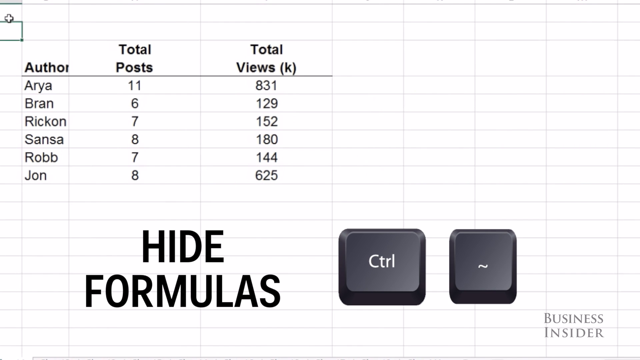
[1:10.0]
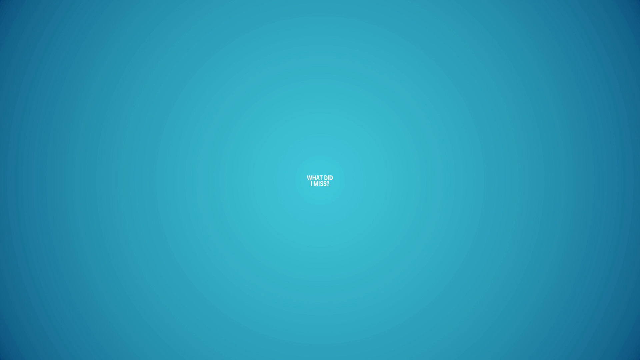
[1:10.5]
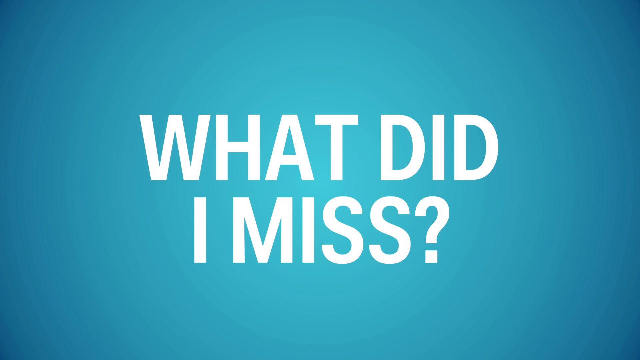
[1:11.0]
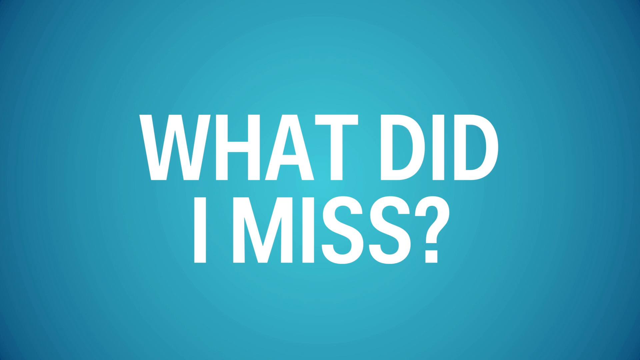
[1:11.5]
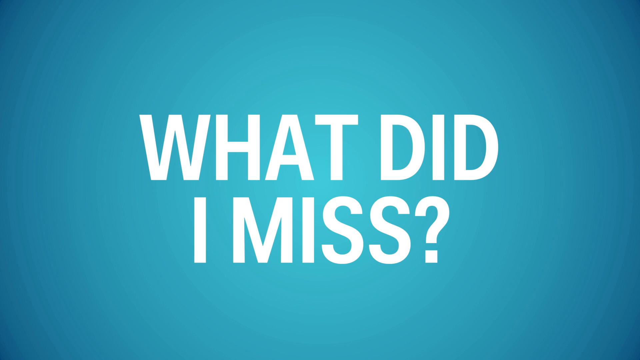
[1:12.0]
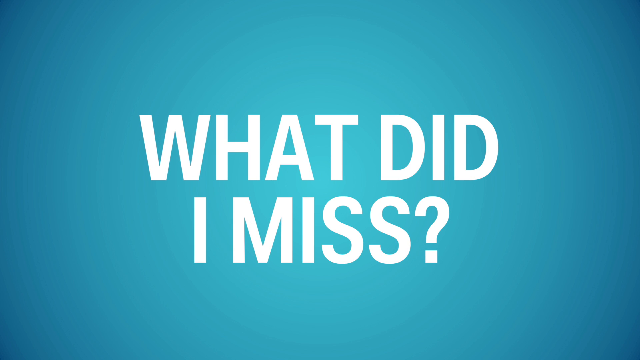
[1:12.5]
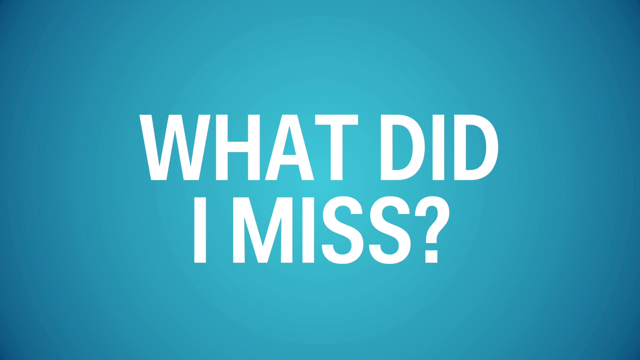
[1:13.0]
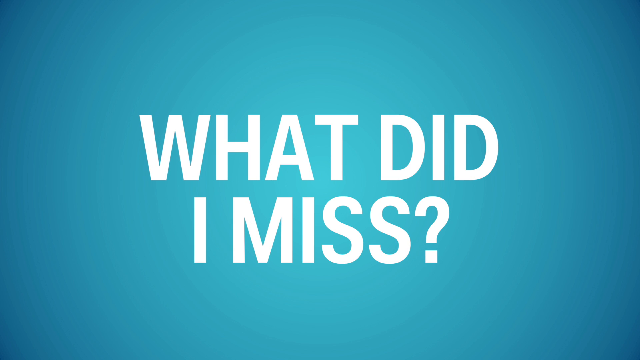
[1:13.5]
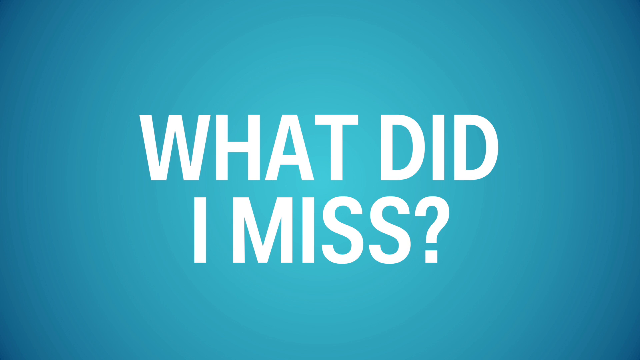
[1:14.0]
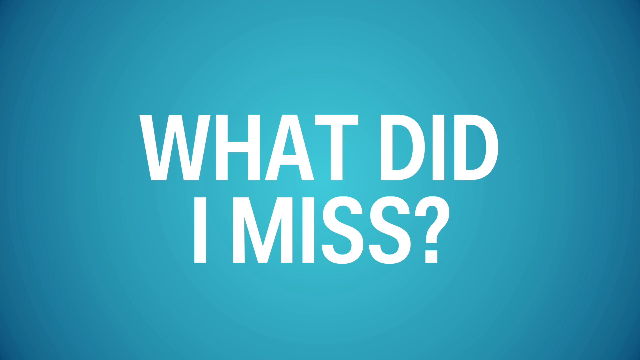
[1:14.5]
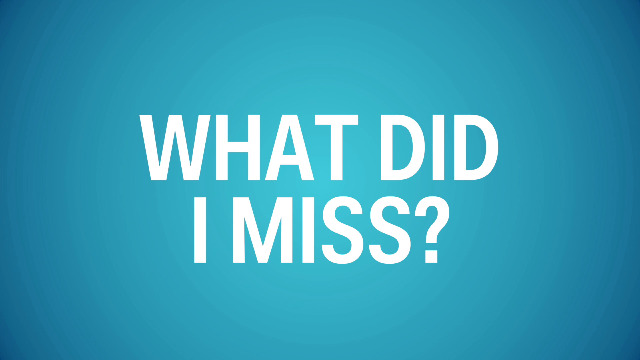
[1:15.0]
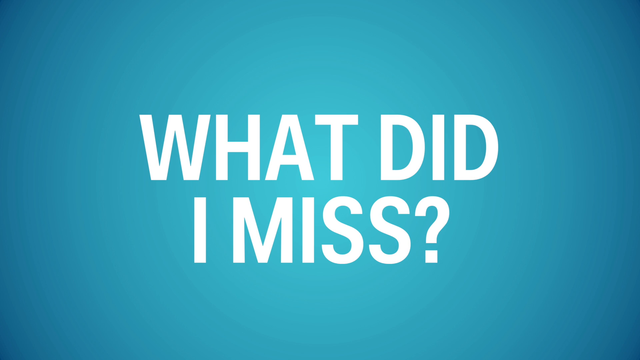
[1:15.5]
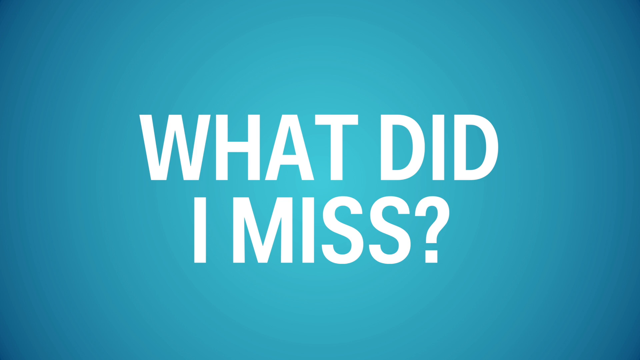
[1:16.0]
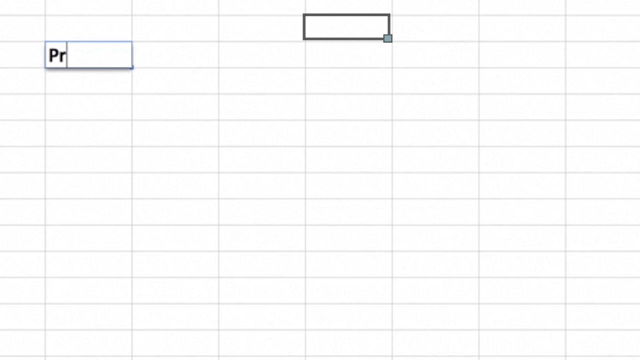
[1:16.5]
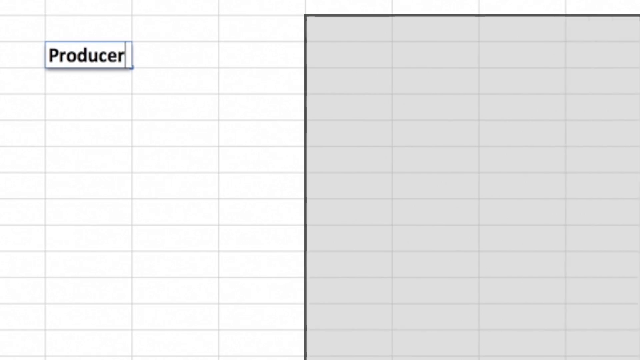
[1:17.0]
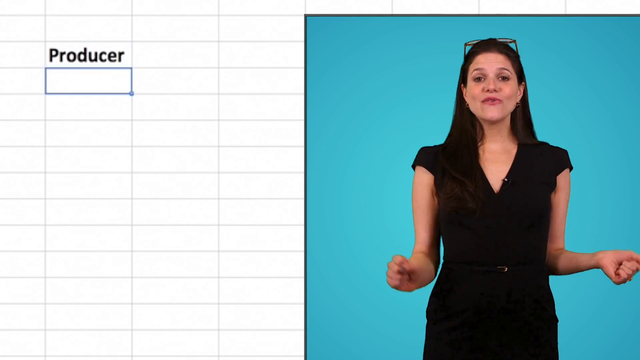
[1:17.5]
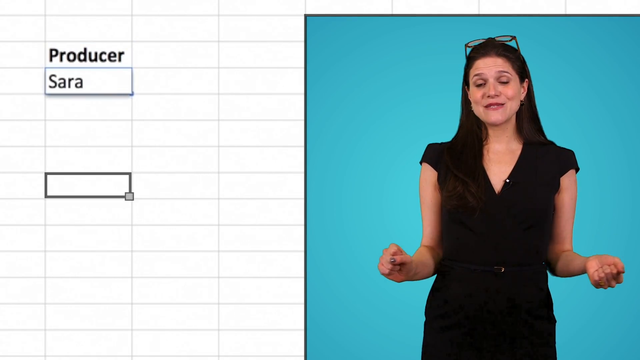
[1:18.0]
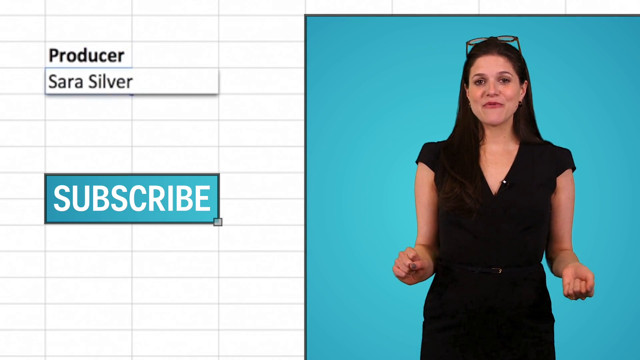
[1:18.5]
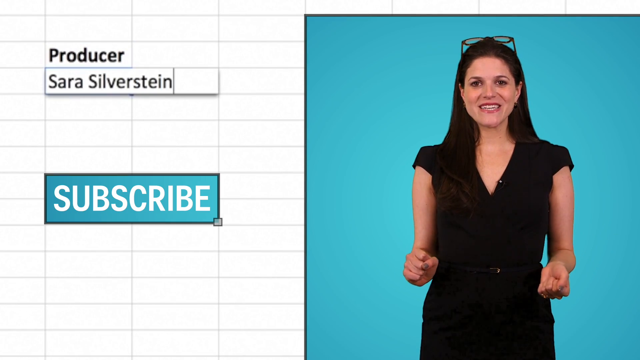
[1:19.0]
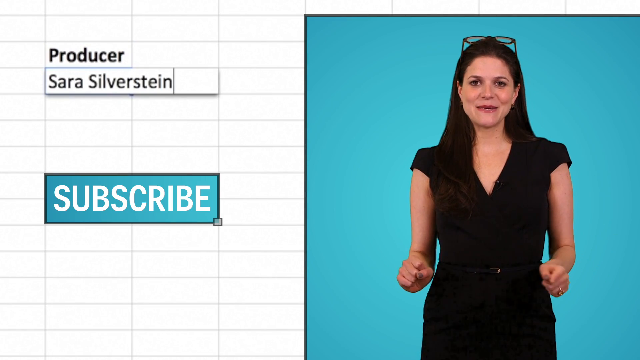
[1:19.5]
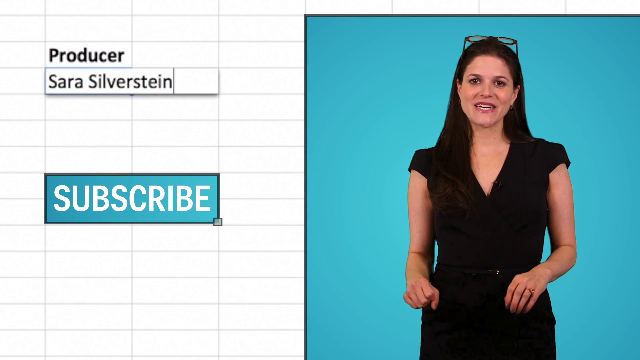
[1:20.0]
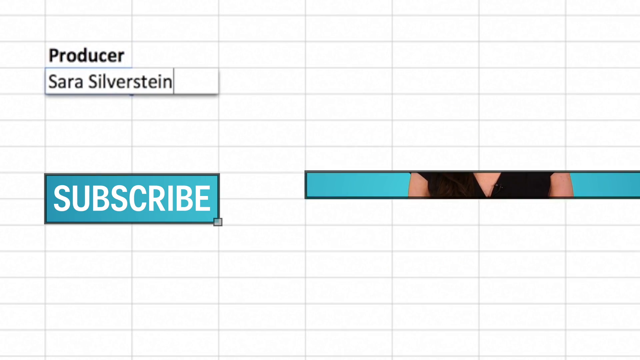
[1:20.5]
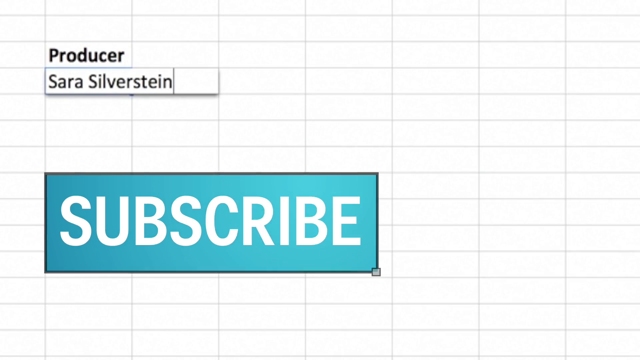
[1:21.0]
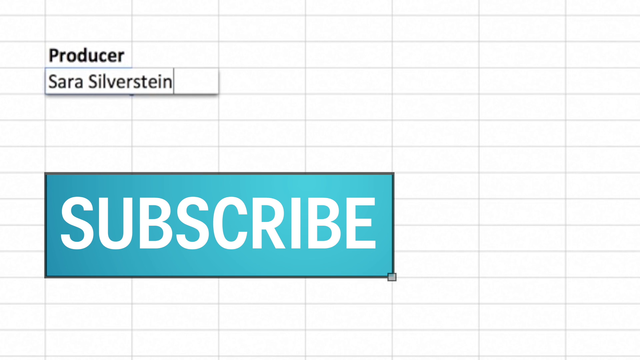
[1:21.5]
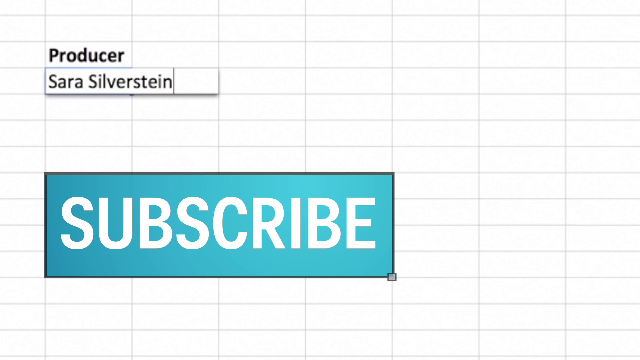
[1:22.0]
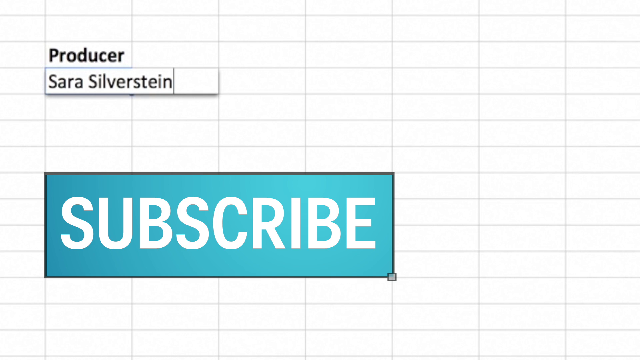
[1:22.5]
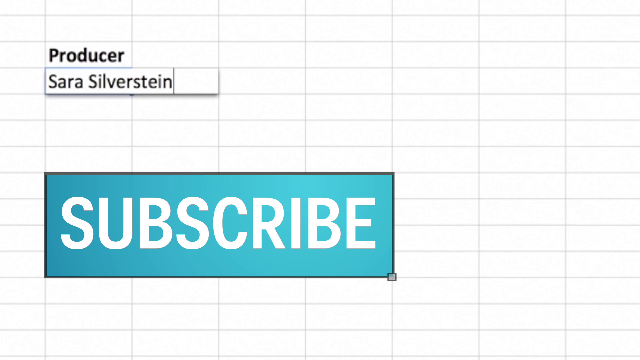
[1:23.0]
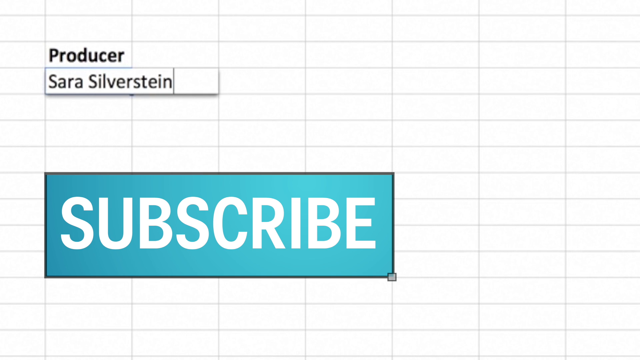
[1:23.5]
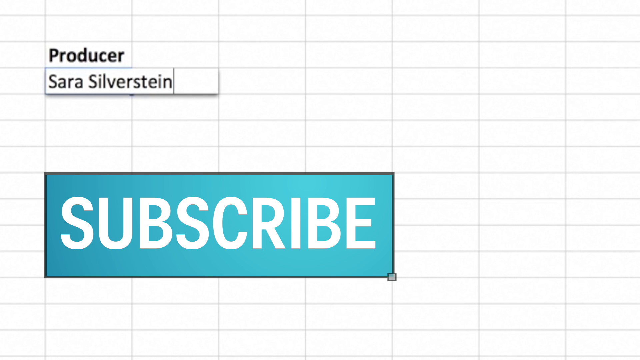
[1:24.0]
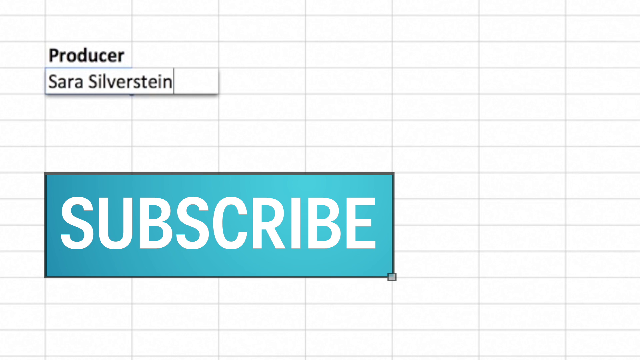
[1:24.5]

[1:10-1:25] A bluish-green background pops up on the screen with the text "What did I miss?" An Excel spreadsheet then appears with the word "producer" written on the sheet. On the right side there is a video of a woman talking into the camera, and below it on the left side there is a box that says "Subscribe." The image of the woman then goes down, and the "Subscribe" box gets larger on the screen.